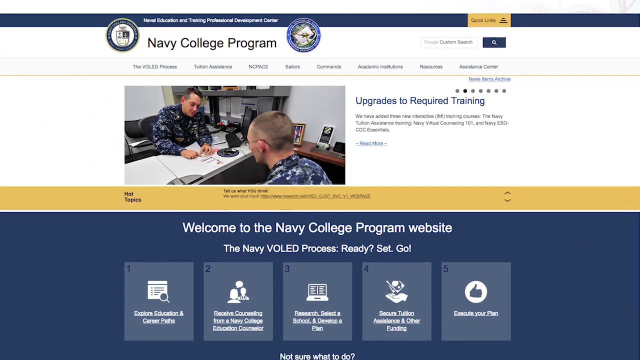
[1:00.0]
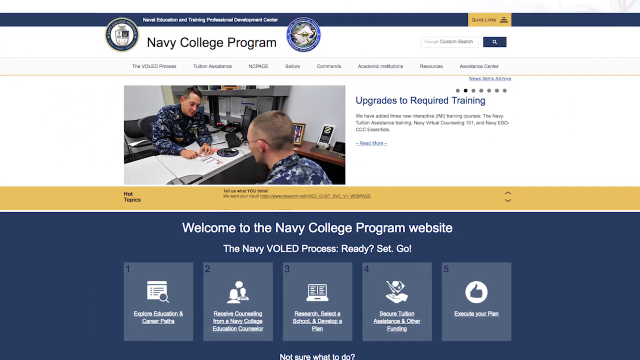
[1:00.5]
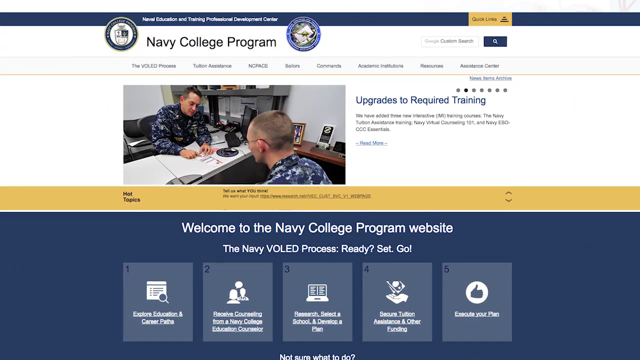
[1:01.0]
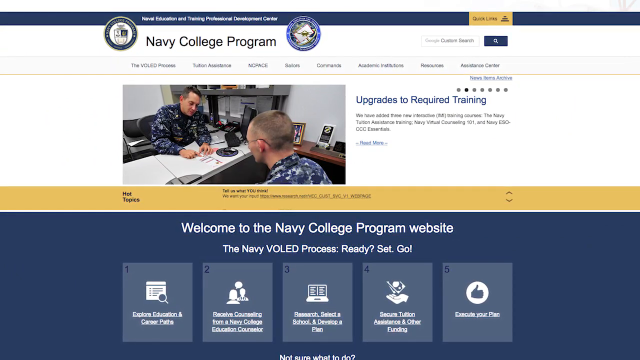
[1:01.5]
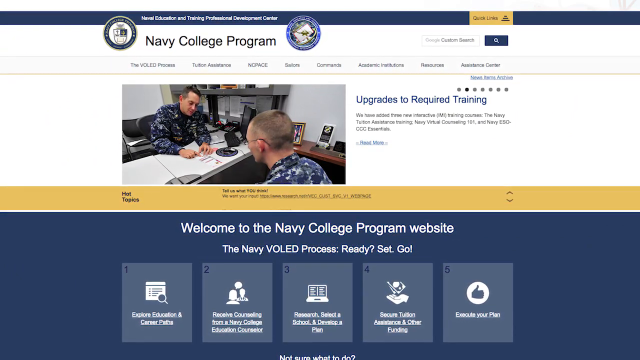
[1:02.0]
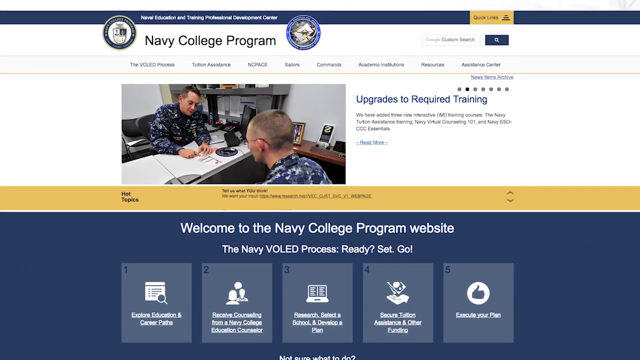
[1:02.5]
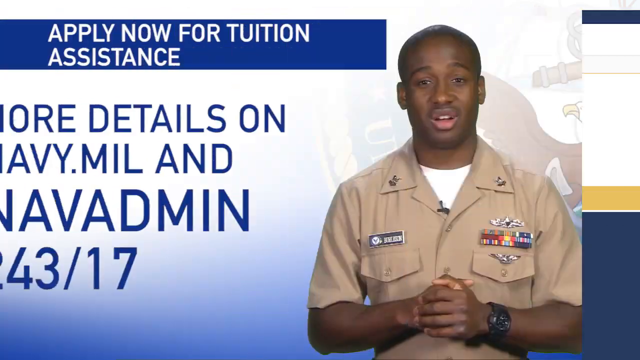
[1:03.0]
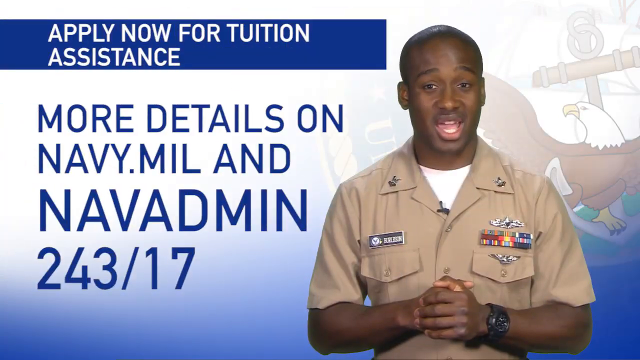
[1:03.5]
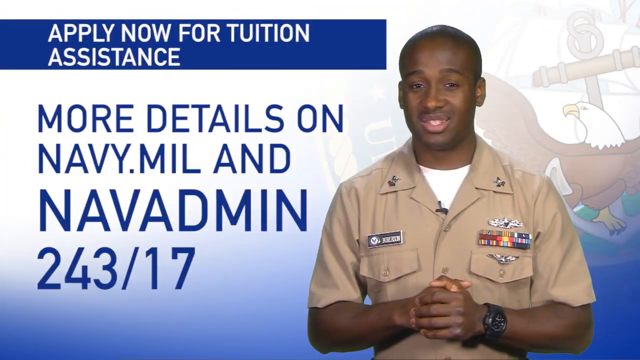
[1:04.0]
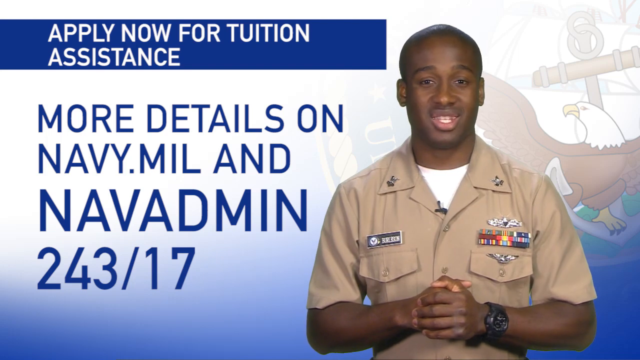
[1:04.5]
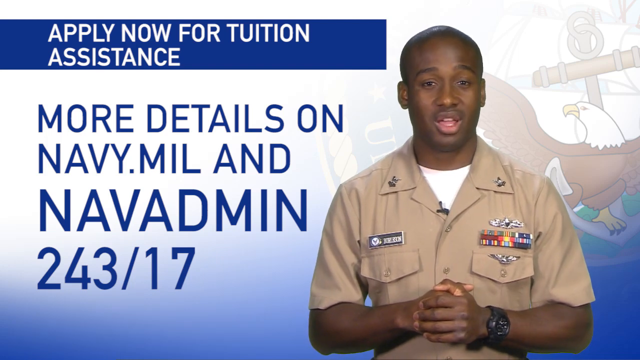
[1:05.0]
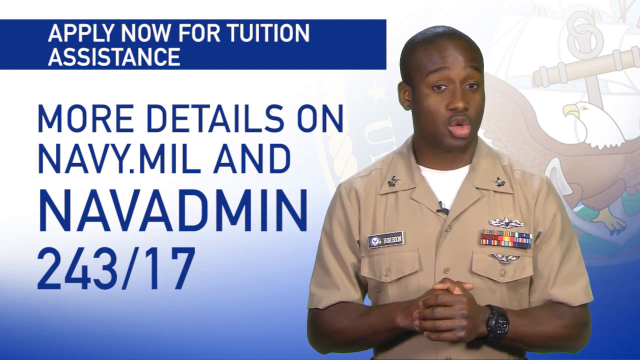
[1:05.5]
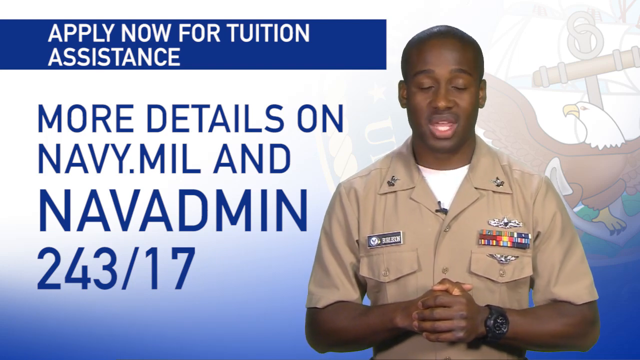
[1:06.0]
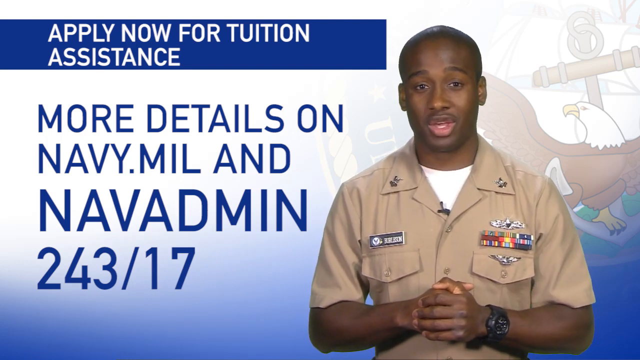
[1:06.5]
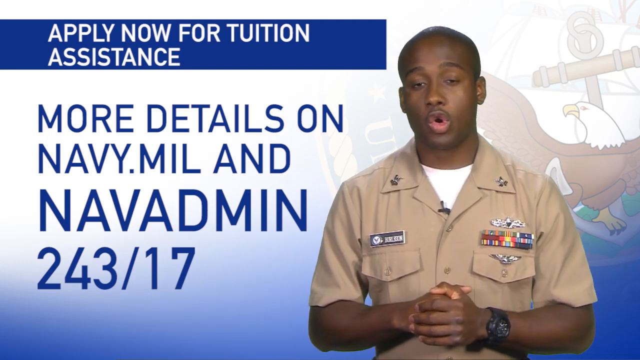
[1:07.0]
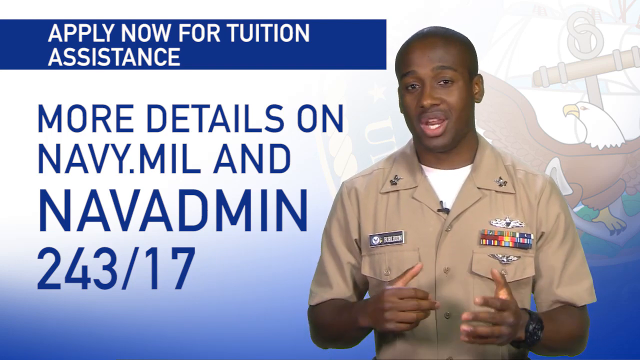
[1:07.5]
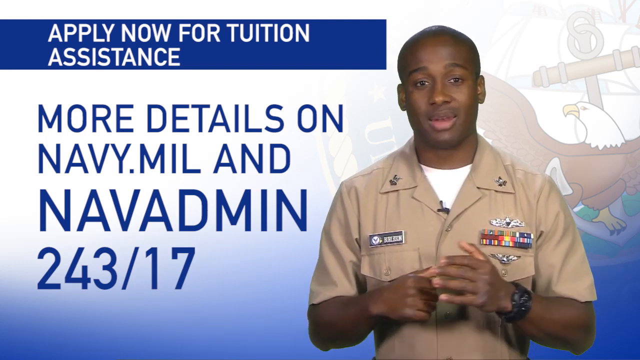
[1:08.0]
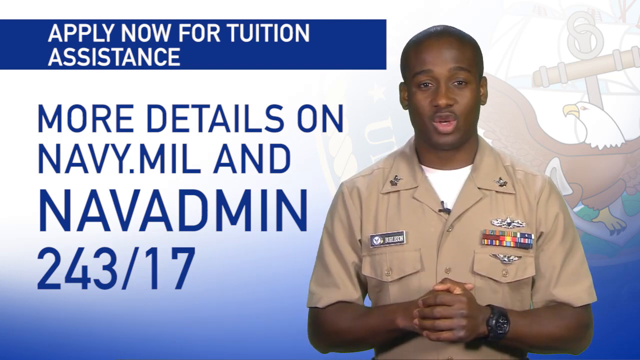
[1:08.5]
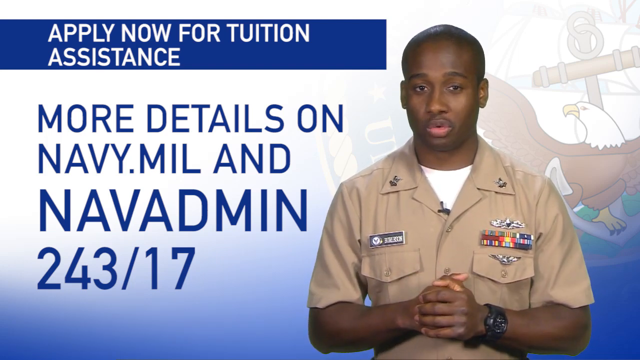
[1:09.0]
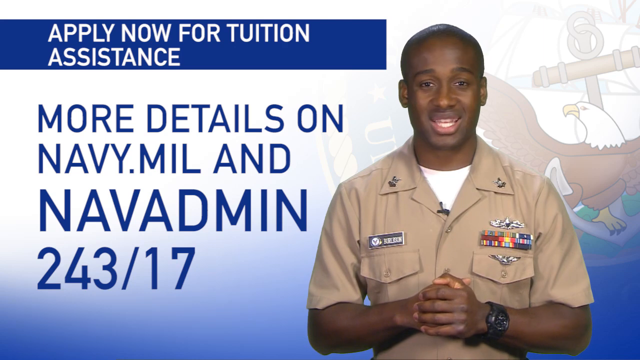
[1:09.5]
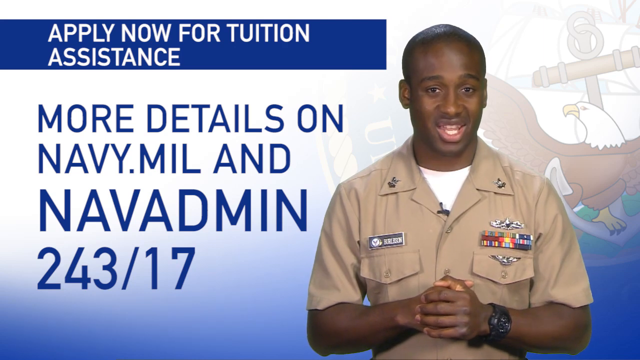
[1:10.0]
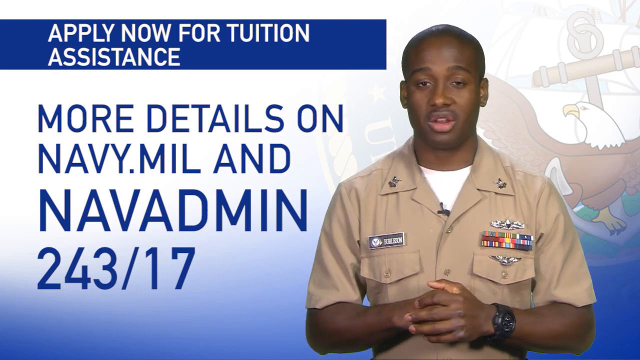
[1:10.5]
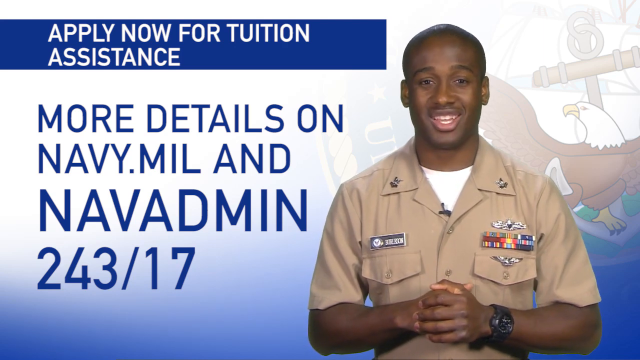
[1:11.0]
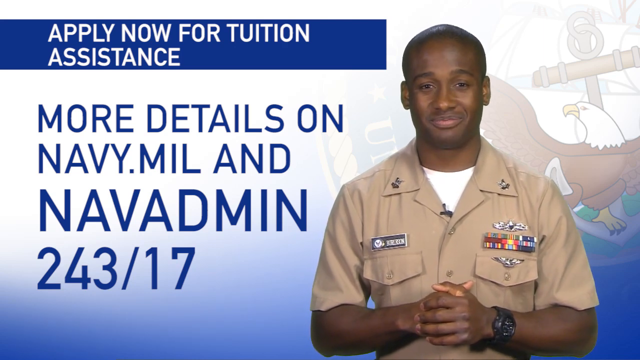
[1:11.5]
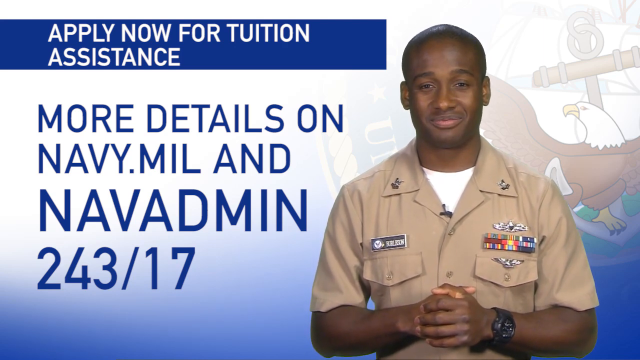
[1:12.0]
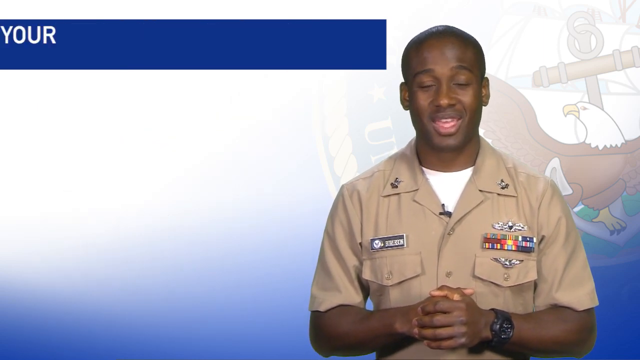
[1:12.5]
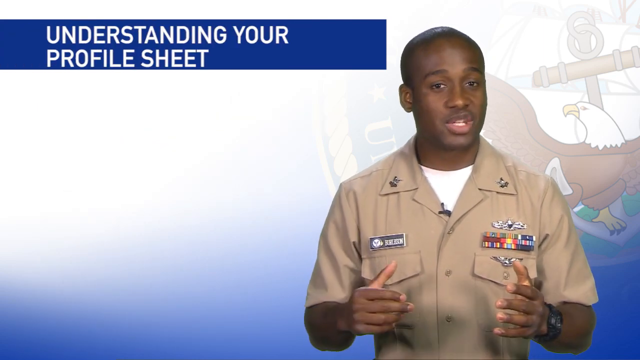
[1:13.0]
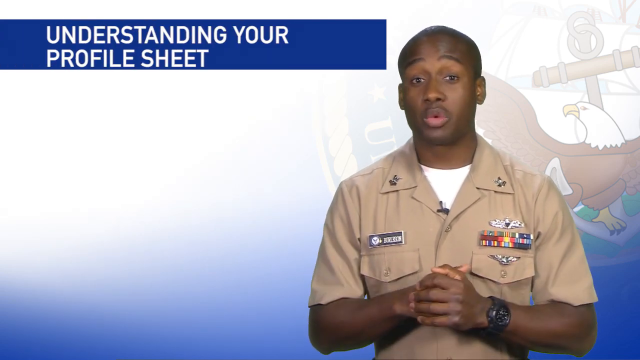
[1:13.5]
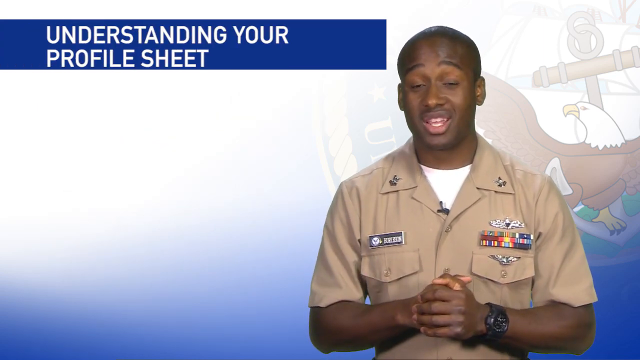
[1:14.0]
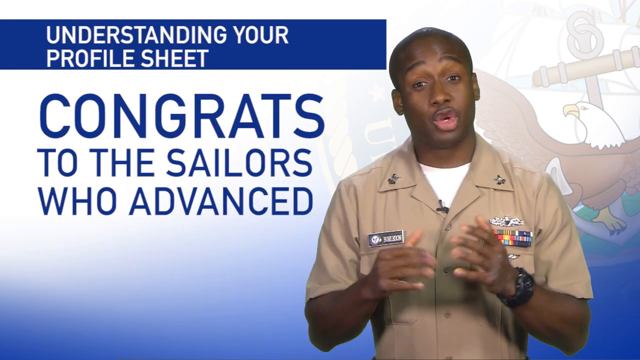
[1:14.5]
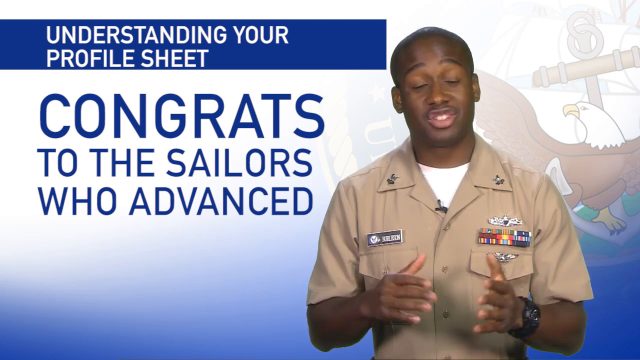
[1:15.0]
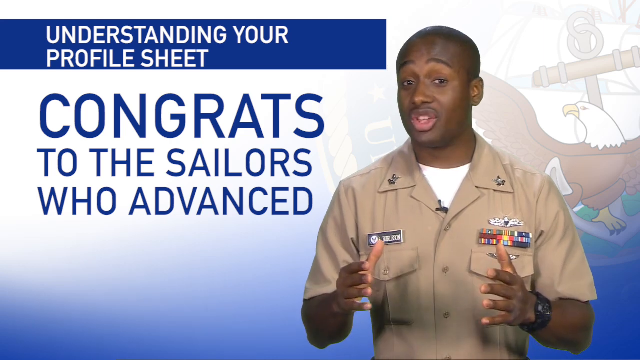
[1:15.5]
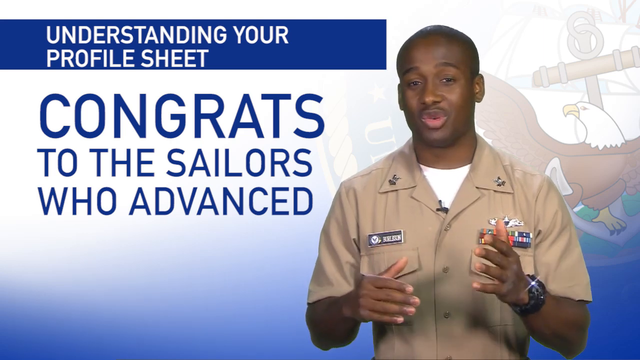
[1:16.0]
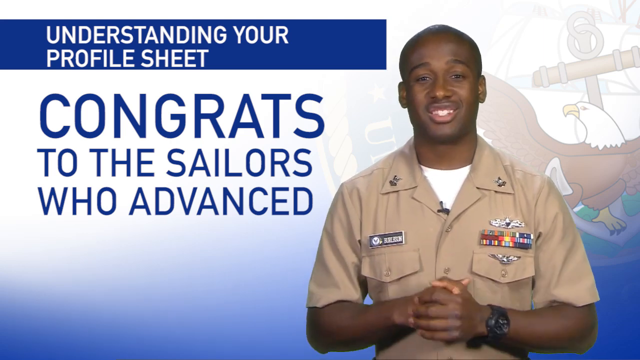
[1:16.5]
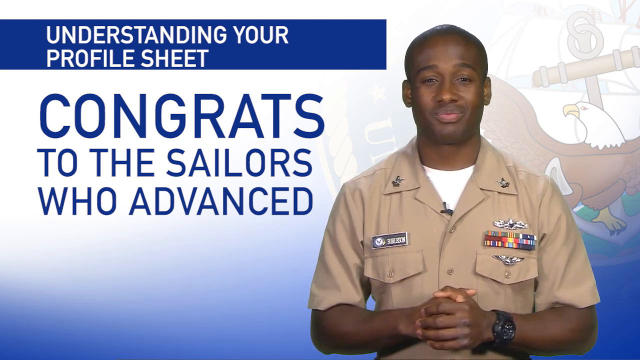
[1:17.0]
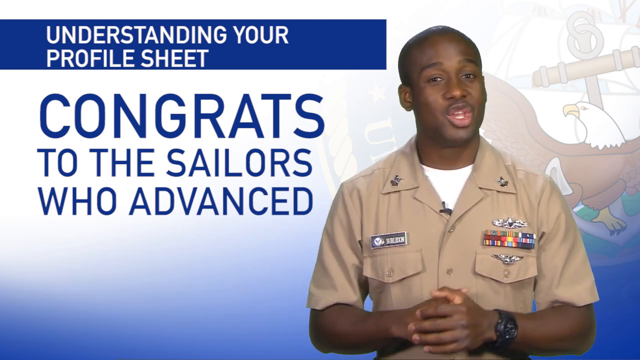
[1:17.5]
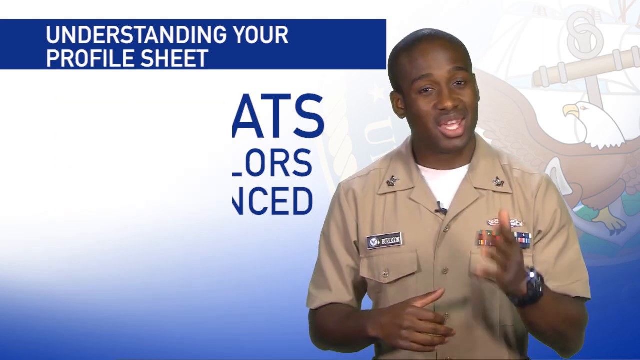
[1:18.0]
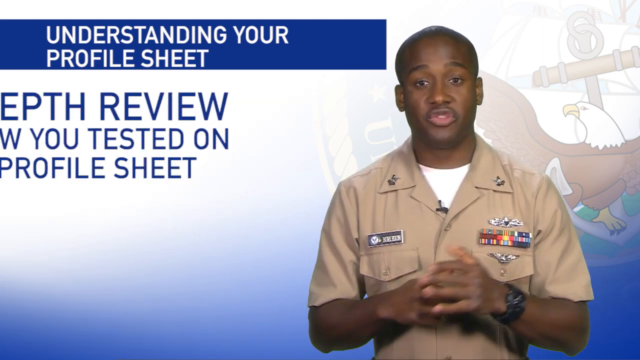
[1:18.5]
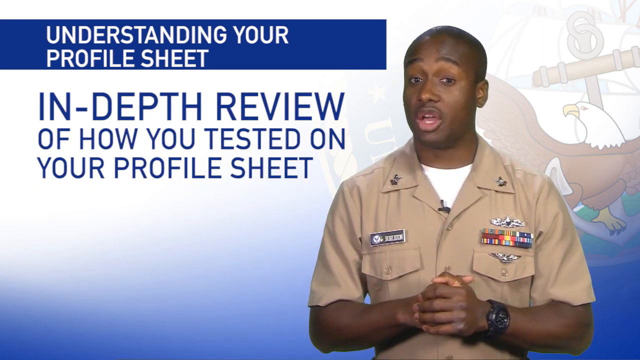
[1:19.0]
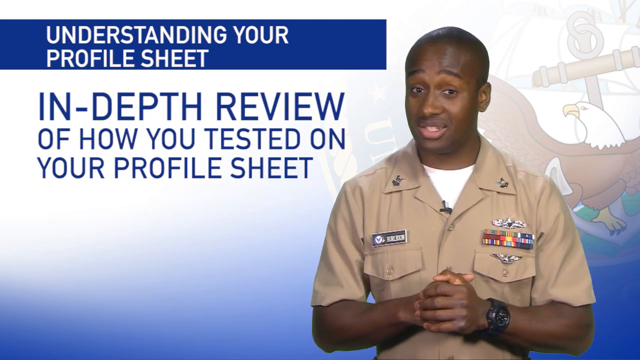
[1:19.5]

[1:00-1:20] The web page disappears and the video returns to the man talking. Text on the left side reads "more details on navy.mil and navadmin24317," then "understanding your profile sheet," "congrats to the sailors who went advanced" and "In-depth review of how you tested on your profile sheet." The web page shown earlier has buttons along the bottom numbered as steps one to five: step one "explore educators and career path," step two "receive counselling from a Navy college education counsellor," step three beginning "research, select," step four "secure tuition, administration, and other funding," and step five "explore your plan."